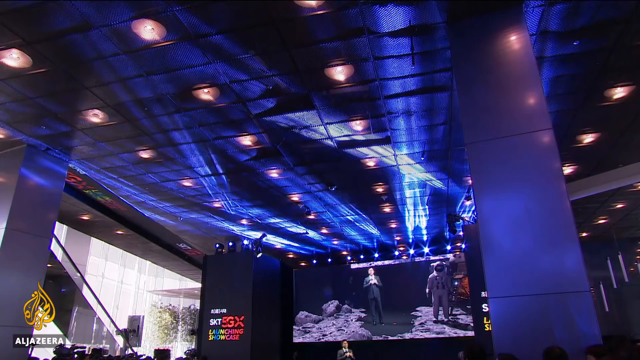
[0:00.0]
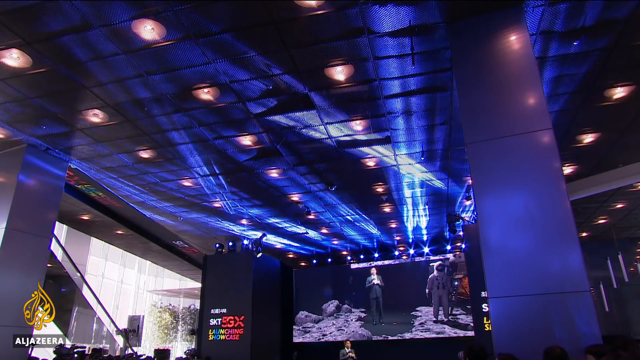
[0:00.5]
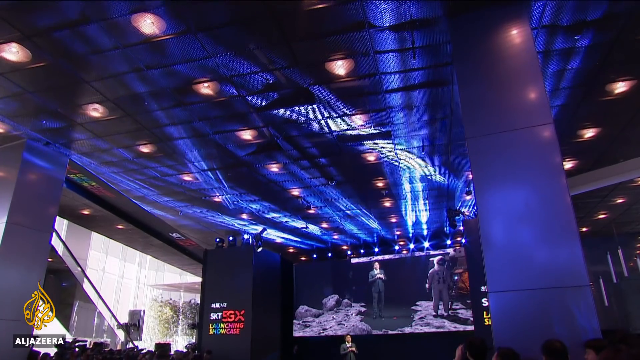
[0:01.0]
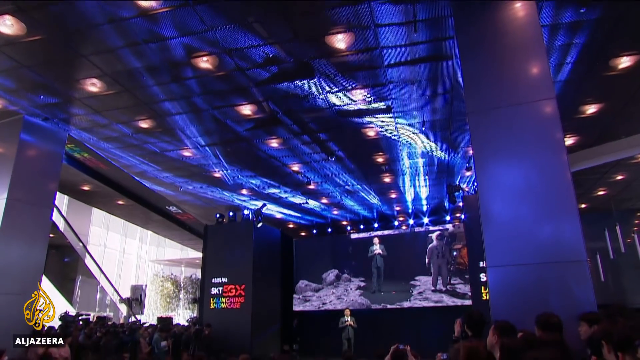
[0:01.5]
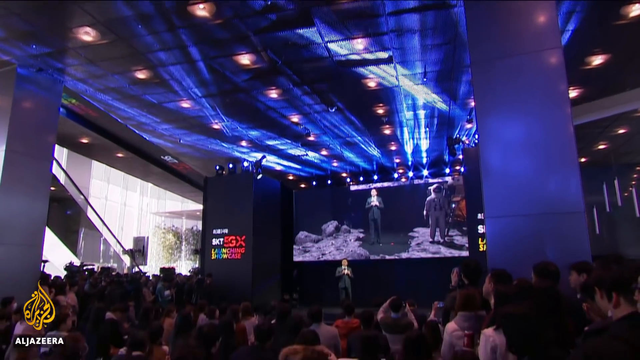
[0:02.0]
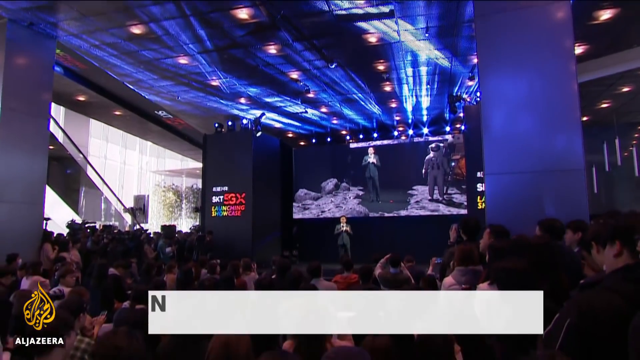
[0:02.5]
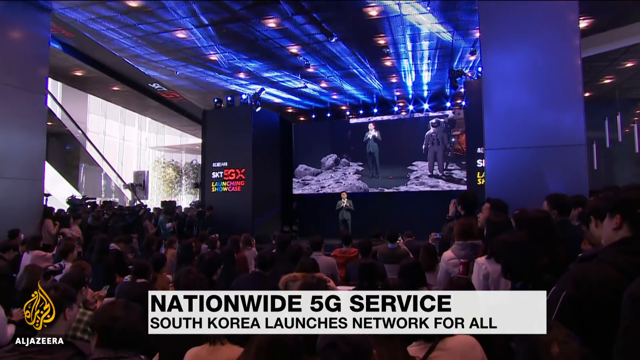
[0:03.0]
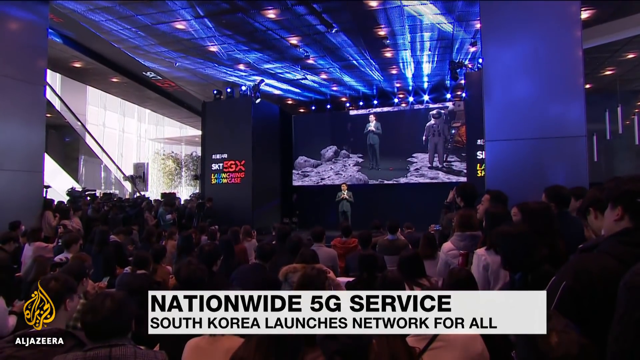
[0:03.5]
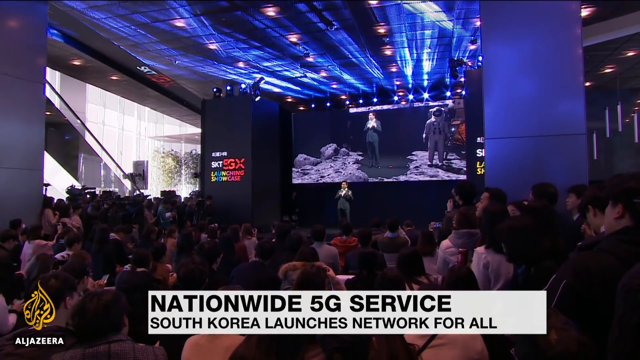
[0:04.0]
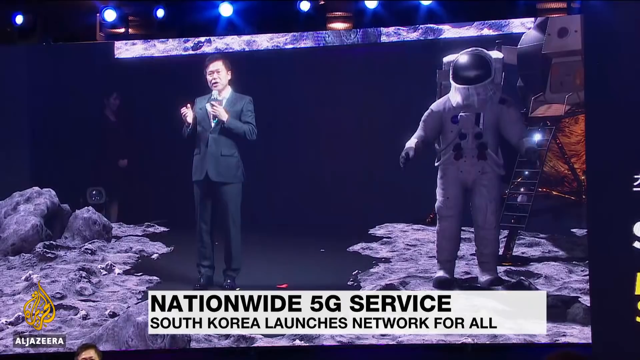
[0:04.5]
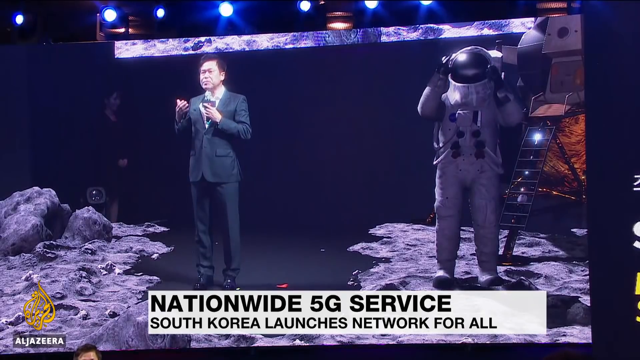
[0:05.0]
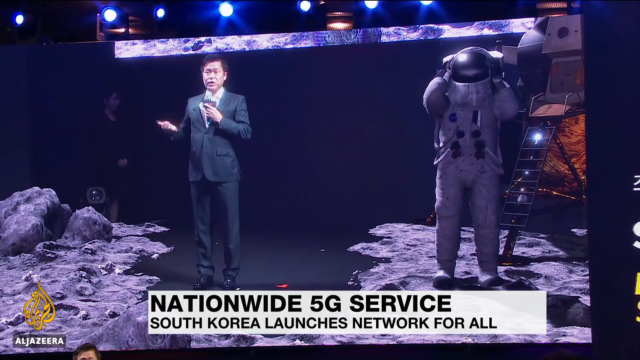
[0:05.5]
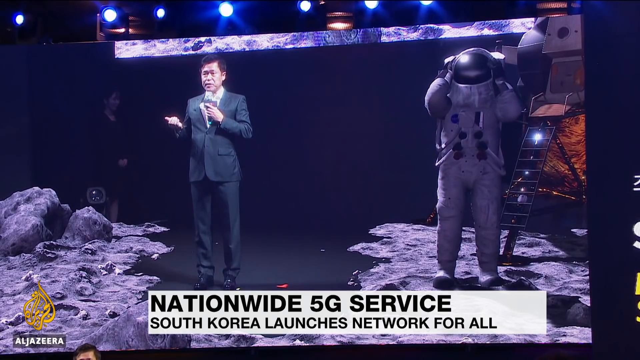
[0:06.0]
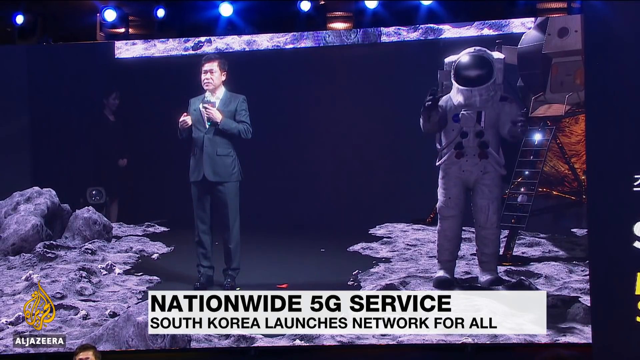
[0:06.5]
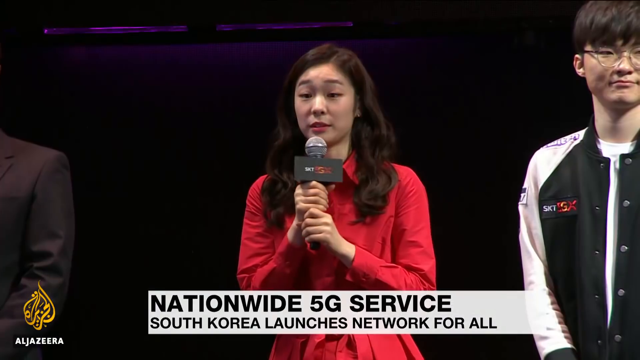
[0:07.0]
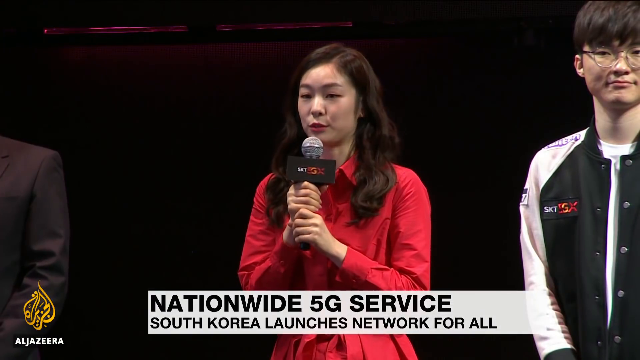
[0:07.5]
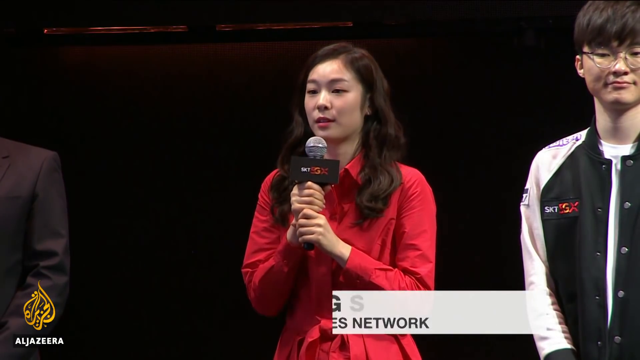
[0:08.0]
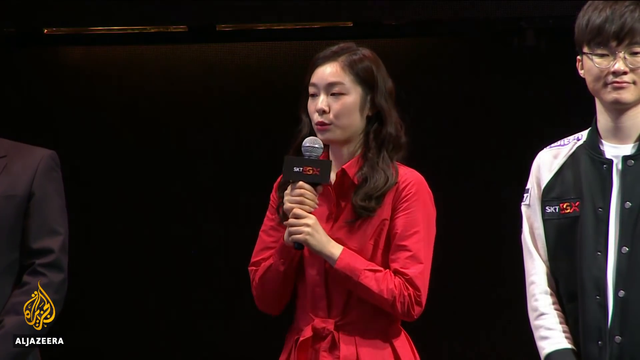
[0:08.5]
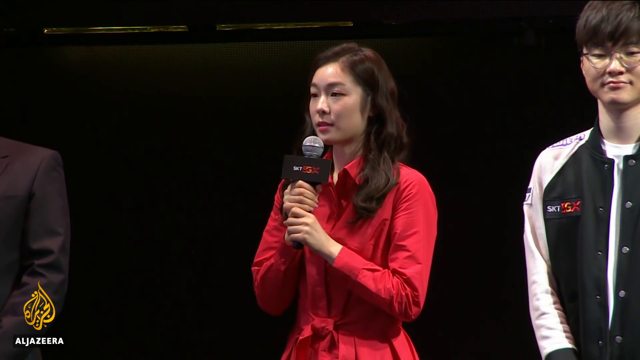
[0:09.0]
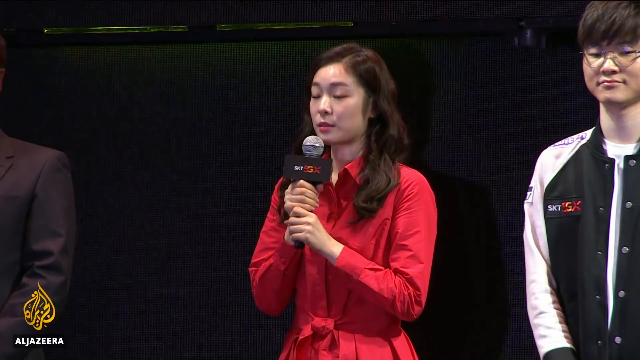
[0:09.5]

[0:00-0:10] A large conference hall has a stage, behind which is a very large screen with a man standing in front of it. Projected on the screen are men walking on the moon. The event is the SKT 5GX launching showcase, as the black pillar next to the stage reads. An Asian man in a black suit stands on the stage as the camera comes in closer on him; he holds a microphone and stands in front of the screen showing the astronauts. The camera then switches to a young Asian woman with long brown hair in a red collared button-down shirt, also holding a microphone. She speaks while standing next to a young Asian person with short black hair and glasses, who wears a black and white jacket with the SKT 5GX company logo. Camera flashes go off from the audience as she speaks. A title on the screen says "Nationwide 5G Service: South Korea Launches Network for All." The footage is from an Al Jazeera news clip.